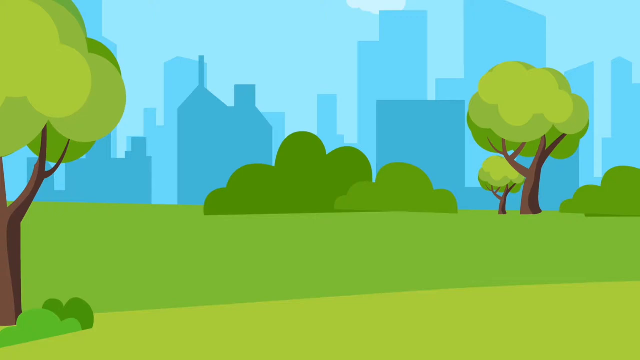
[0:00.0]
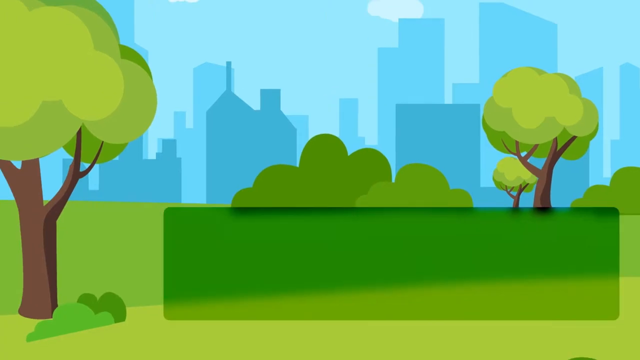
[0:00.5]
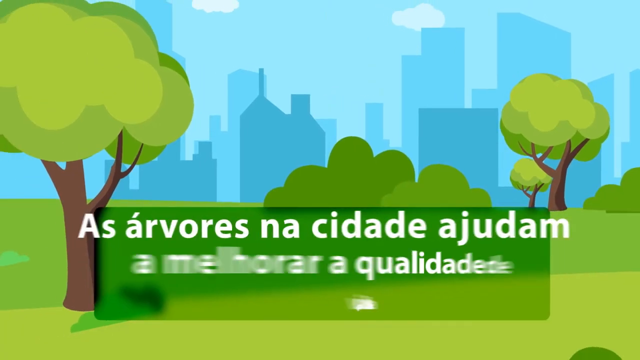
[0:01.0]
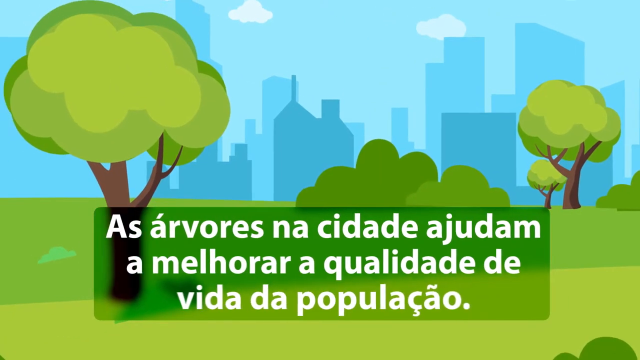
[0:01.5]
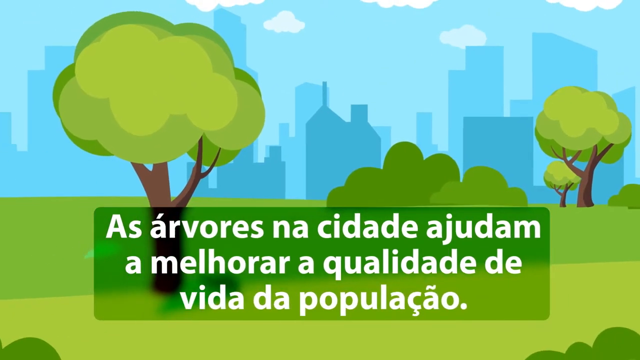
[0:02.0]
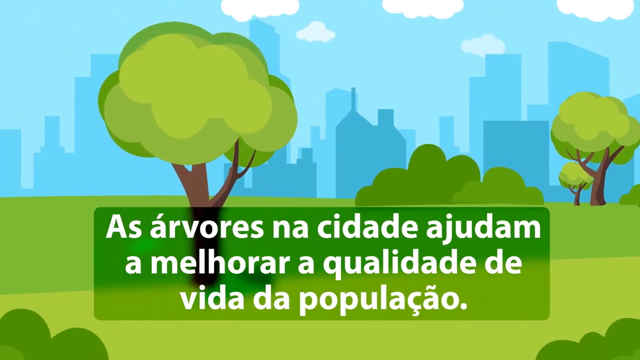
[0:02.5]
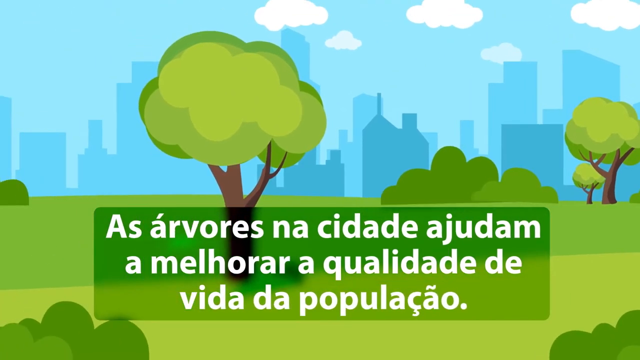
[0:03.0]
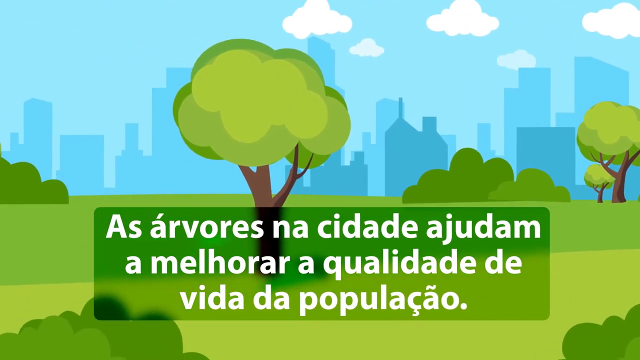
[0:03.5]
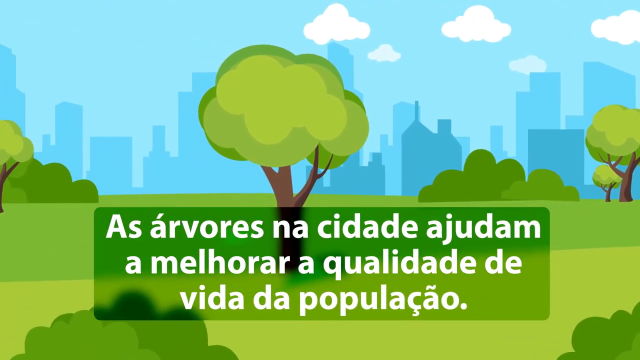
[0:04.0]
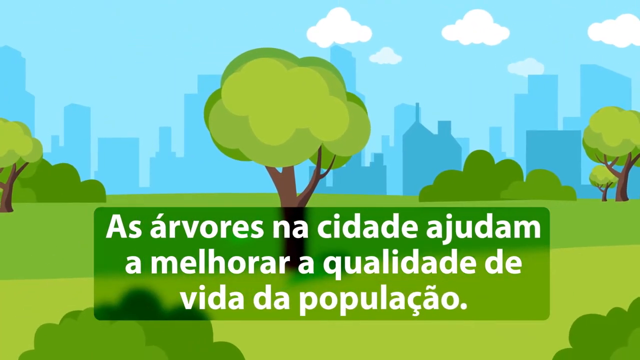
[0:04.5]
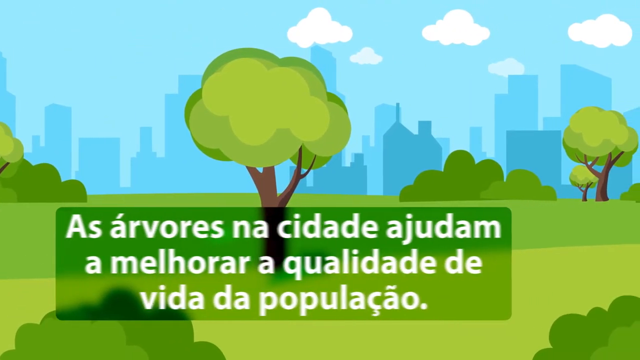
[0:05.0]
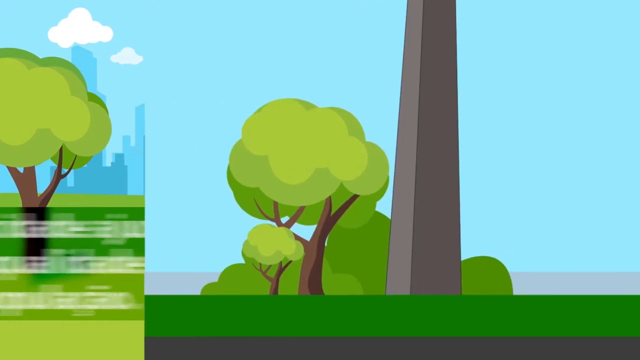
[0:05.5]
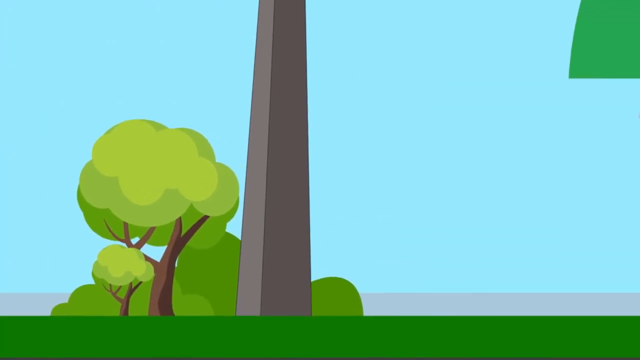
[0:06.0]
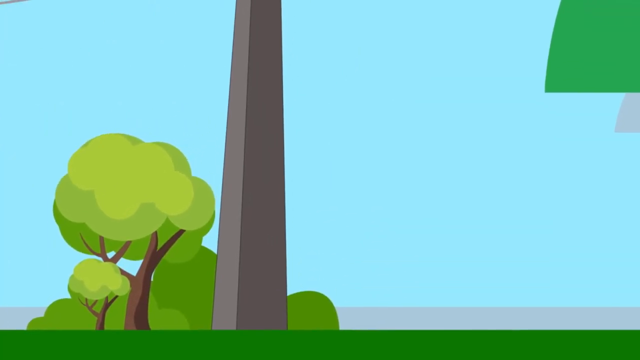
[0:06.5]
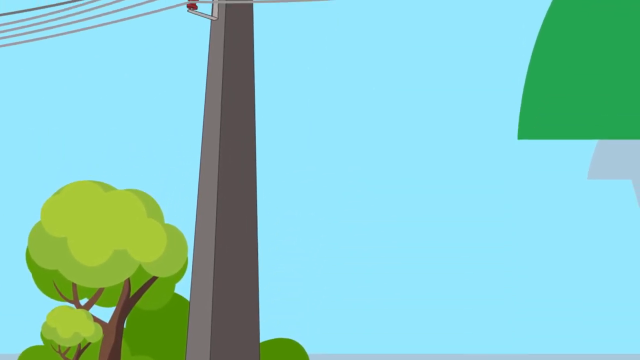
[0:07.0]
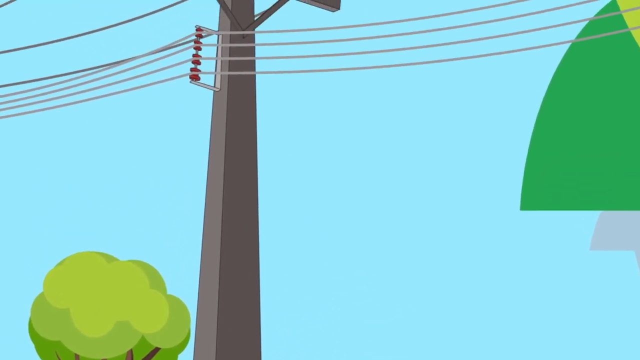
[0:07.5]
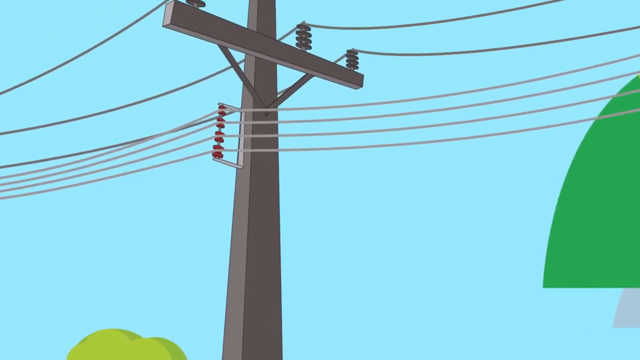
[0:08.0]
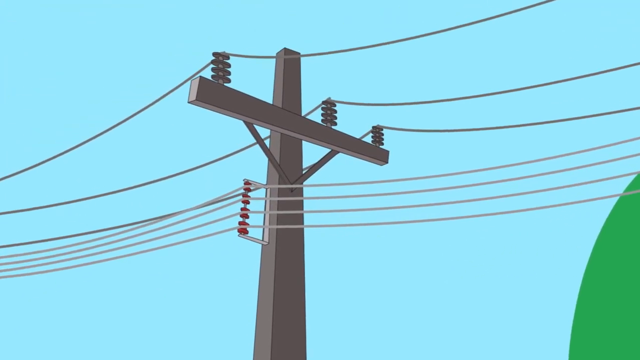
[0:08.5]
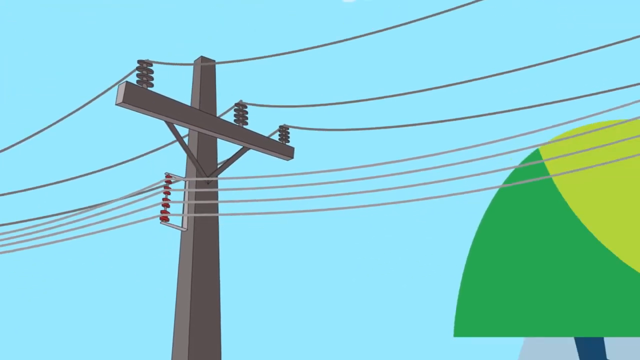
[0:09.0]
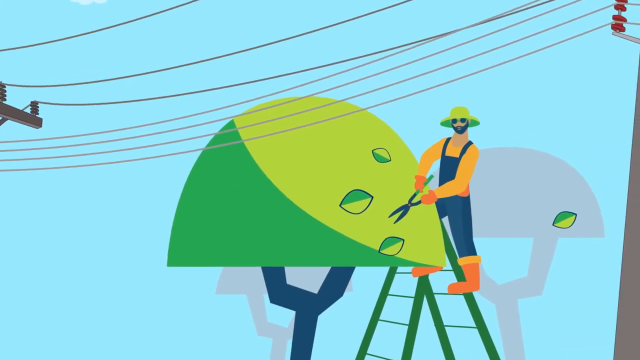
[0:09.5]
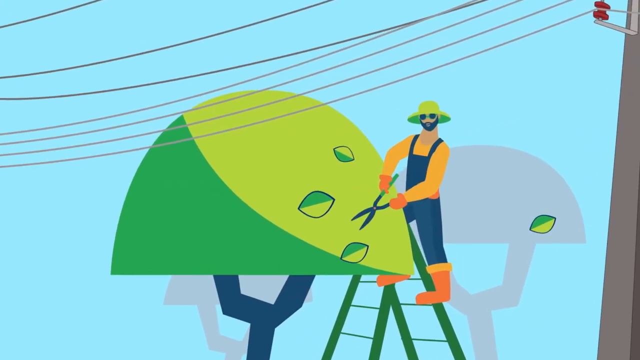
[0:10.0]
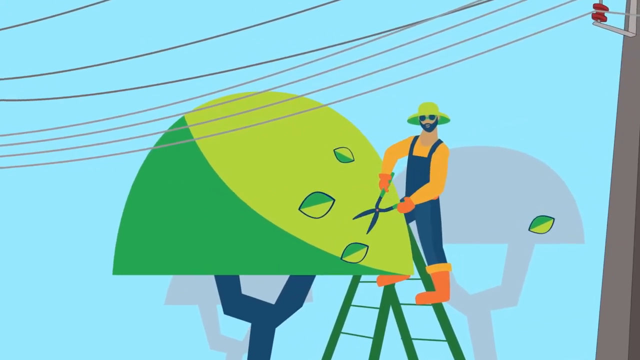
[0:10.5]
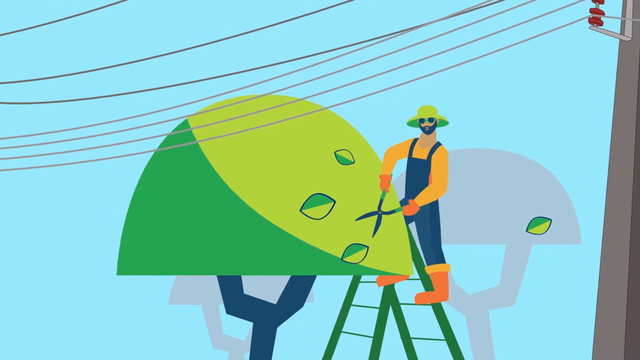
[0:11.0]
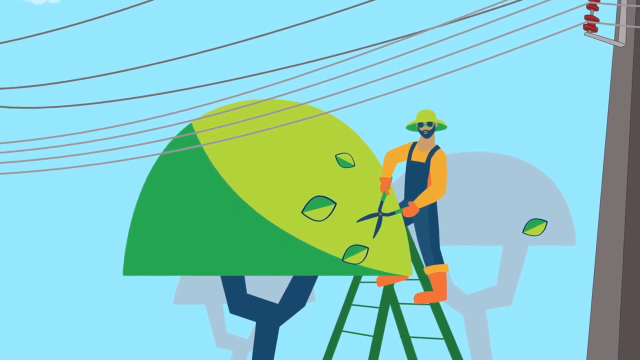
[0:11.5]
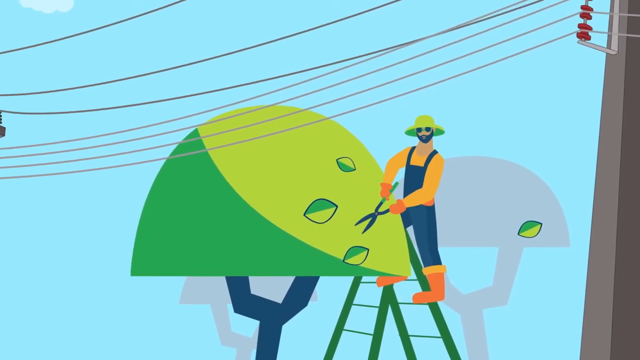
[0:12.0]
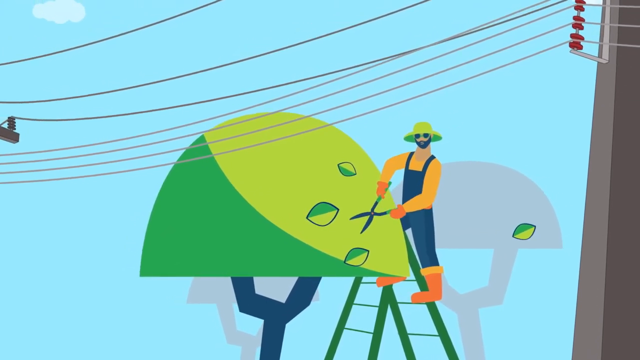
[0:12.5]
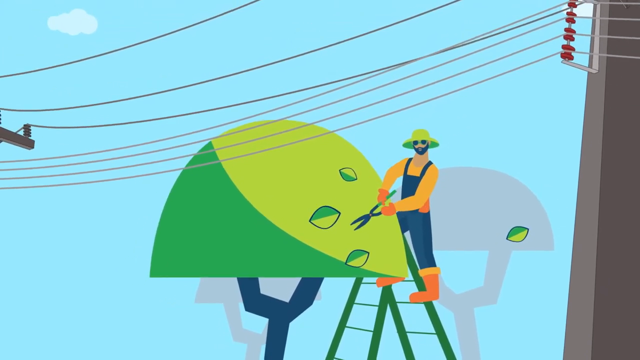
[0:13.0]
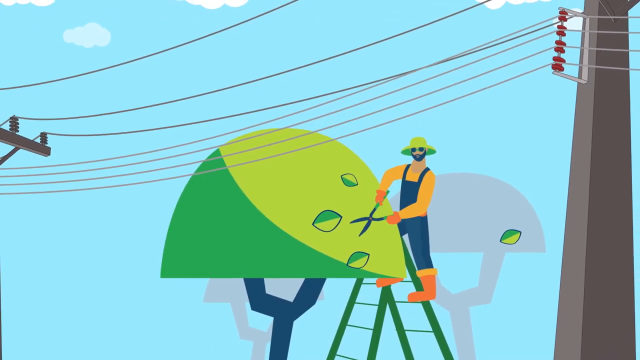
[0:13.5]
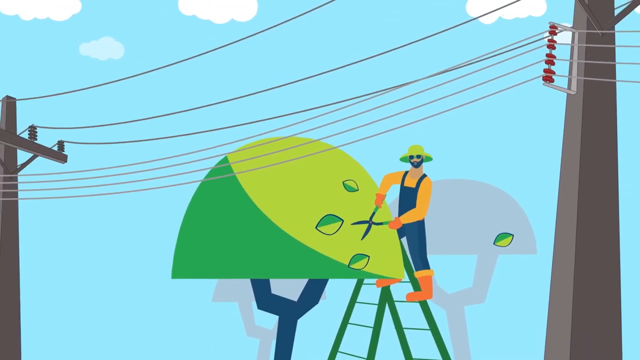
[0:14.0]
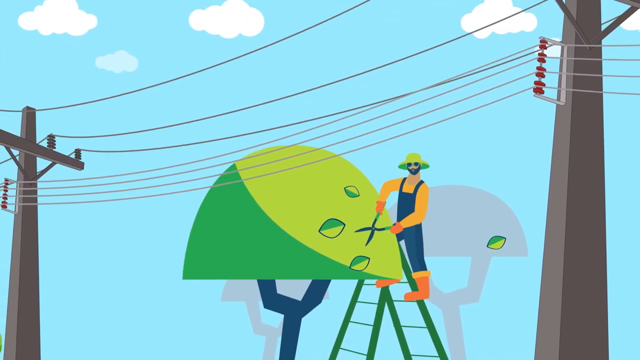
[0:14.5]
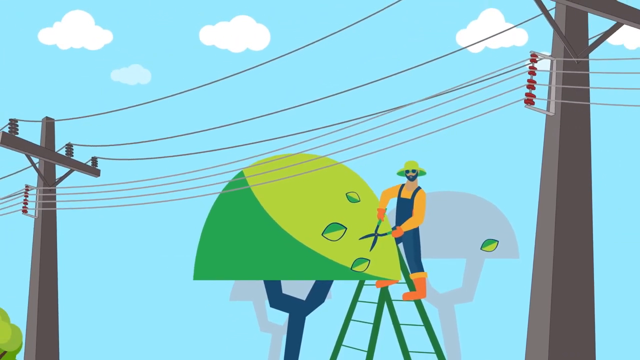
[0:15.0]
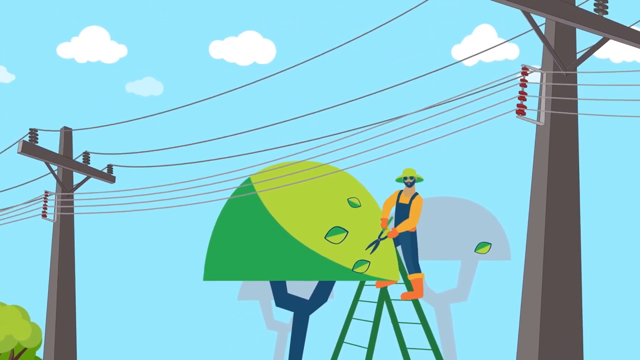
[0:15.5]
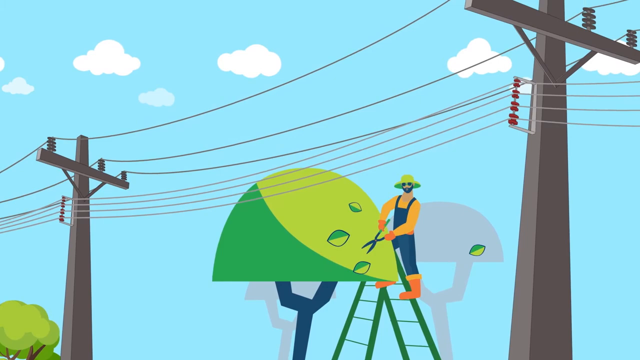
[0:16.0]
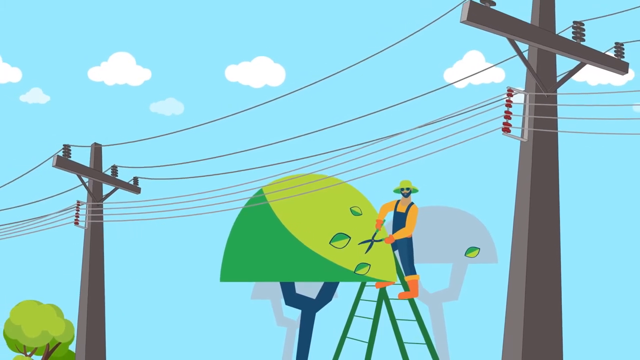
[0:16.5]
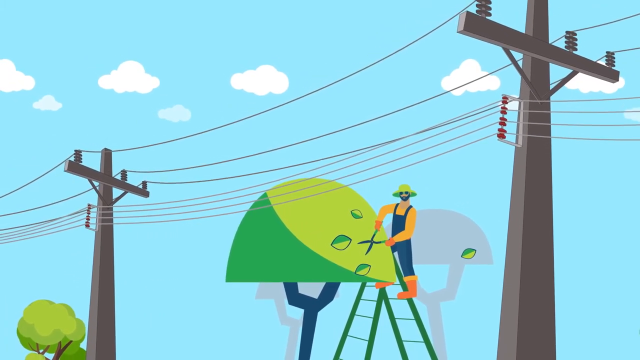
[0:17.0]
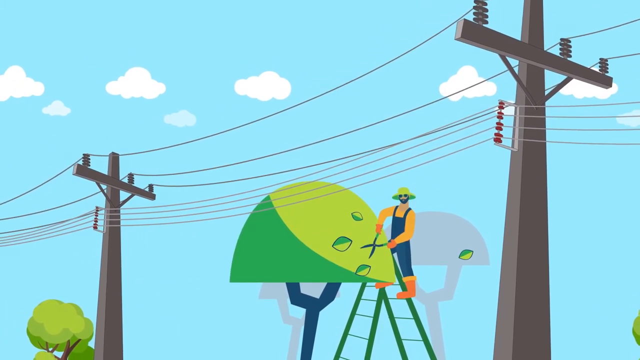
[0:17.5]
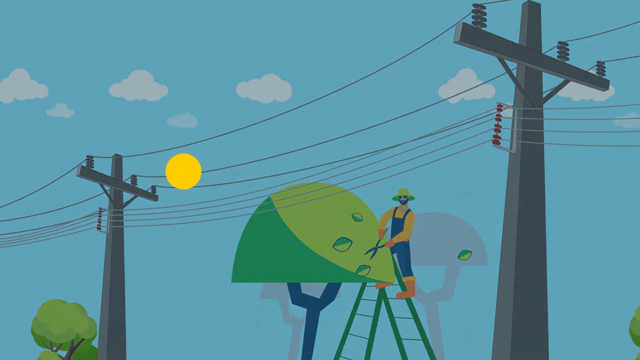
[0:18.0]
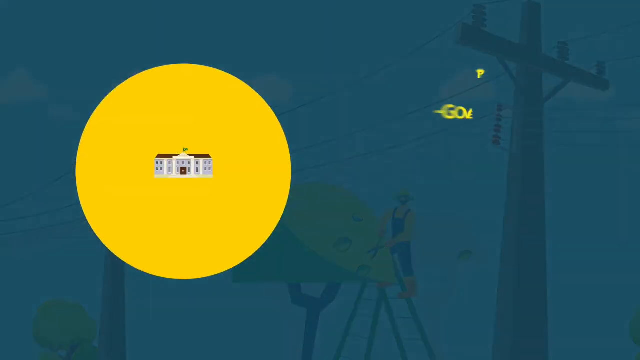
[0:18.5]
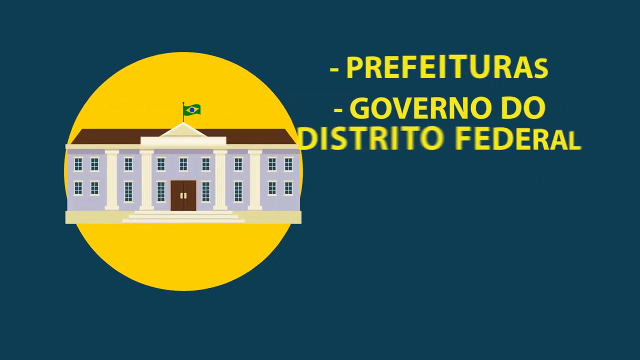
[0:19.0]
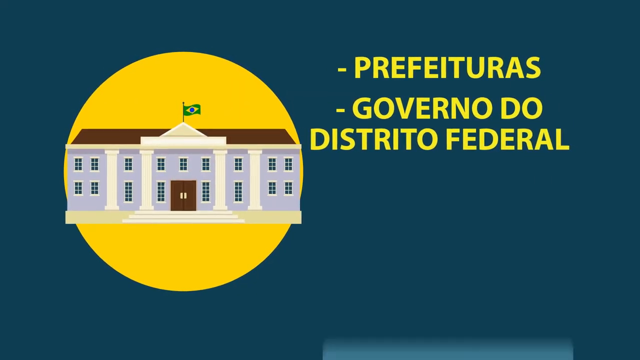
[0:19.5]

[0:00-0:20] An animated cityscape fills the background, with a park in the foreground featuring green grass and nice-looking trees under a blue sky with lots of clouds. A text box on the screen appears to be in Portuguese. The view then kind of pans upward, revealing many power lines, and moves to the right to show a man in suspenders and a green hat using trimmers on a tree; the animation is simple, so it looks like he is just moving the scissors over the tree. The video zooms out, showing that the power lines are right next to him. A yellow circle pops up on the screen showing a very official-looking building with columns on the front and a green flag with a yellow I-shape flying at the top. Yellow bullet points appear next to it, along with a block of text underneath.